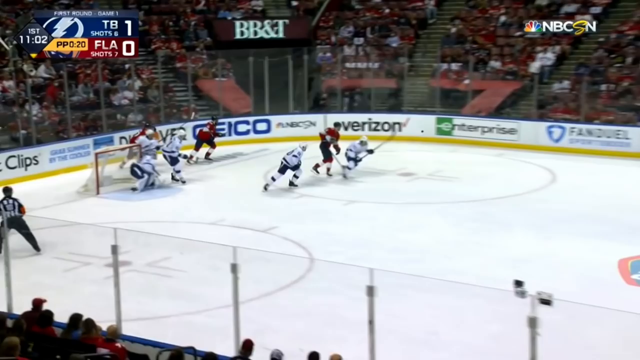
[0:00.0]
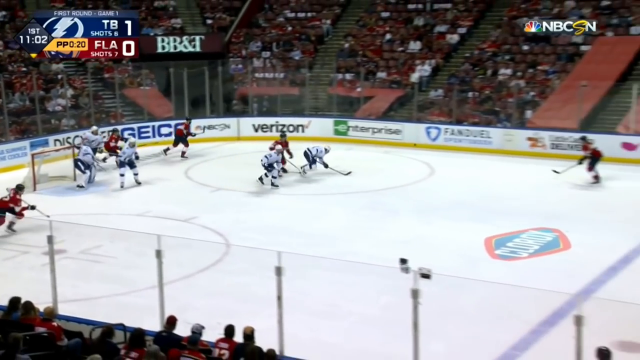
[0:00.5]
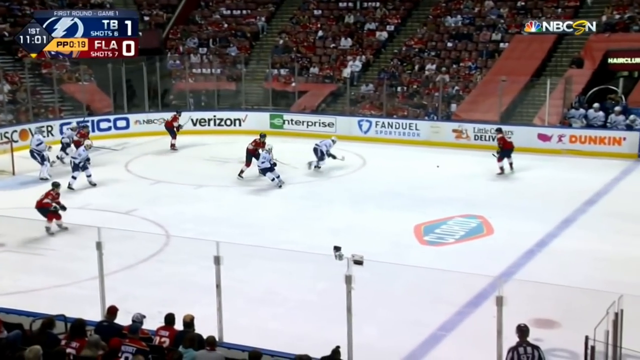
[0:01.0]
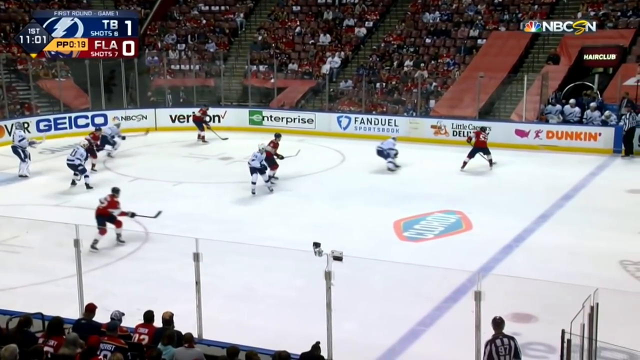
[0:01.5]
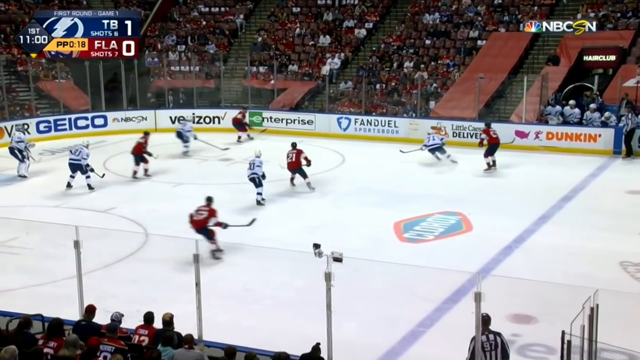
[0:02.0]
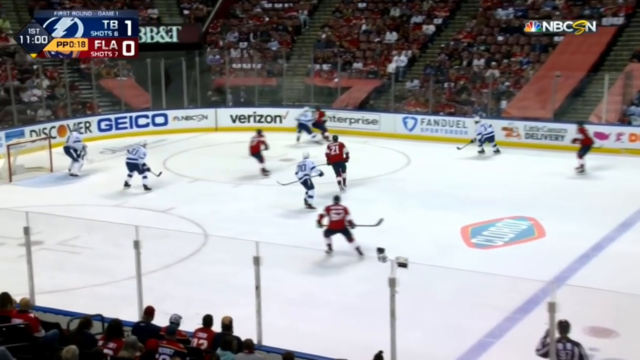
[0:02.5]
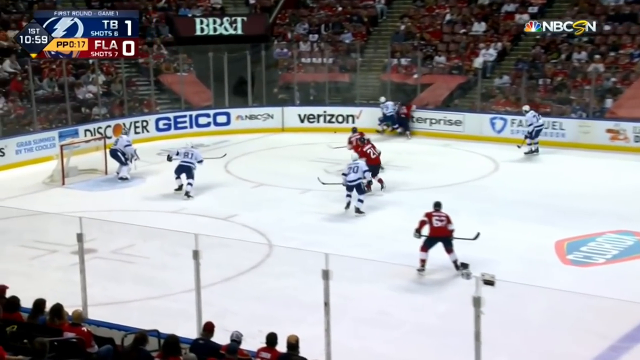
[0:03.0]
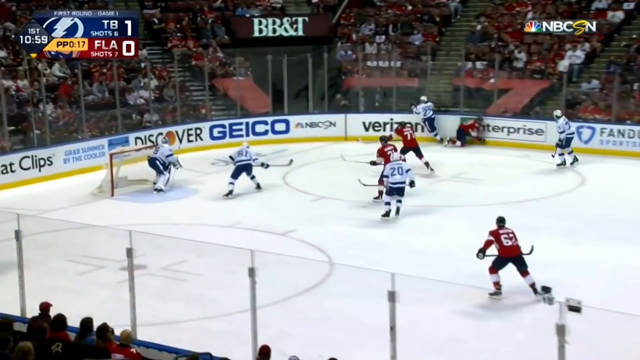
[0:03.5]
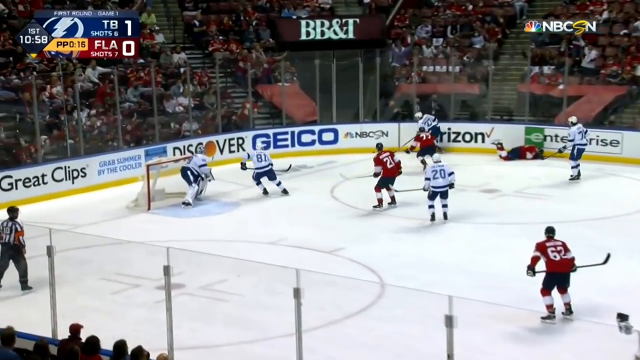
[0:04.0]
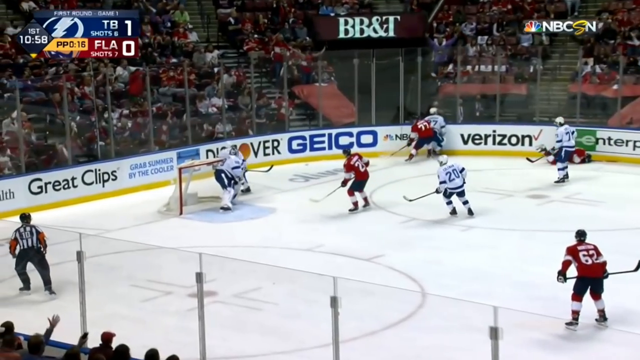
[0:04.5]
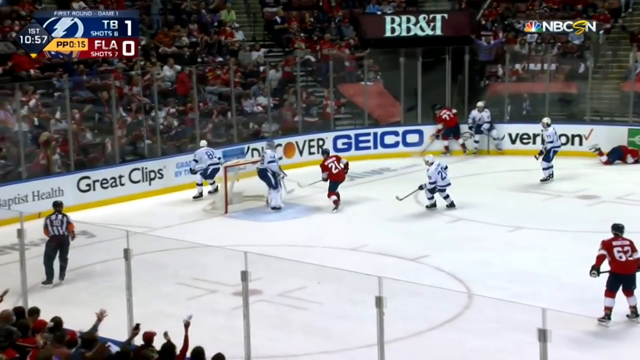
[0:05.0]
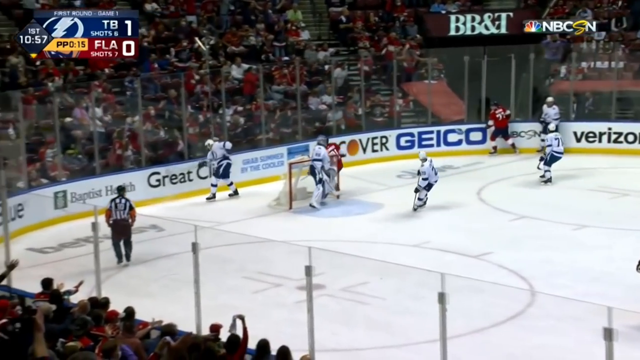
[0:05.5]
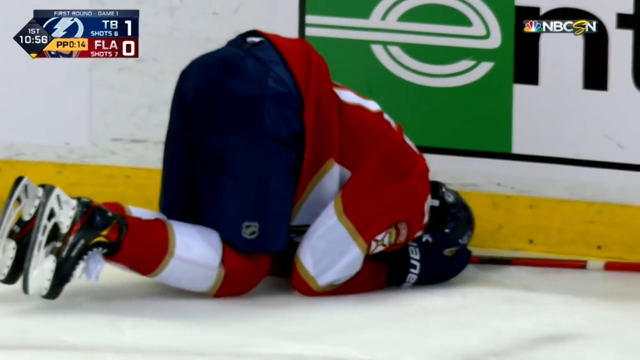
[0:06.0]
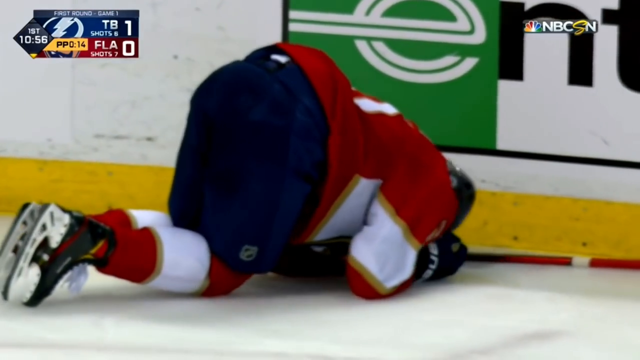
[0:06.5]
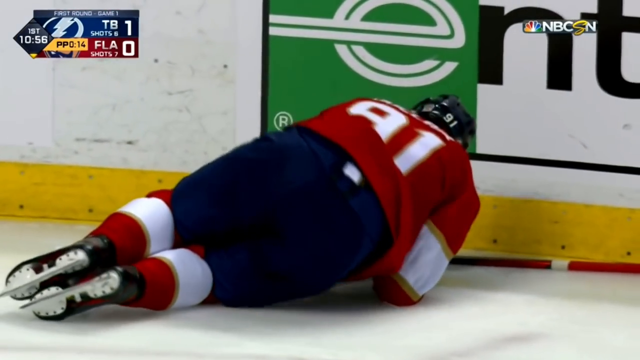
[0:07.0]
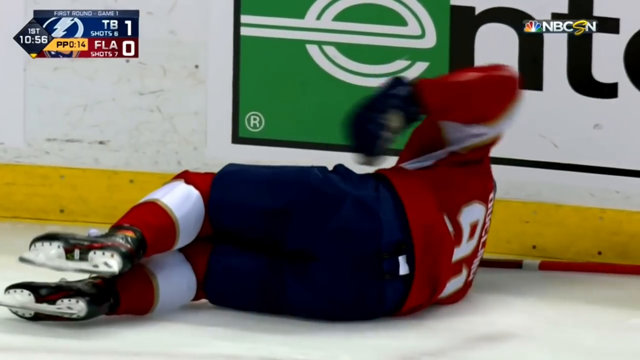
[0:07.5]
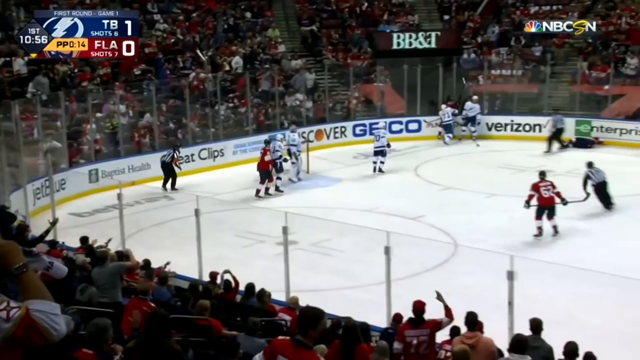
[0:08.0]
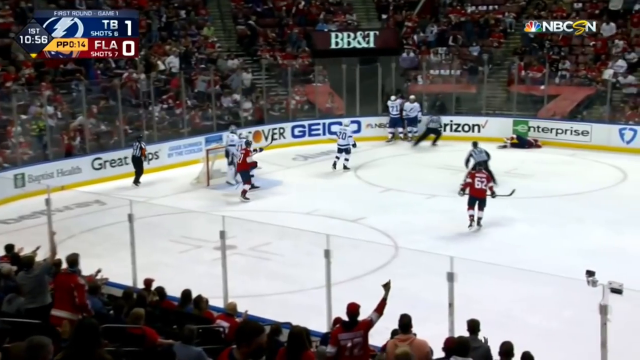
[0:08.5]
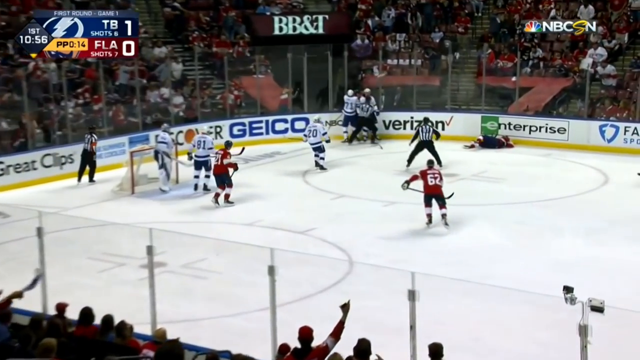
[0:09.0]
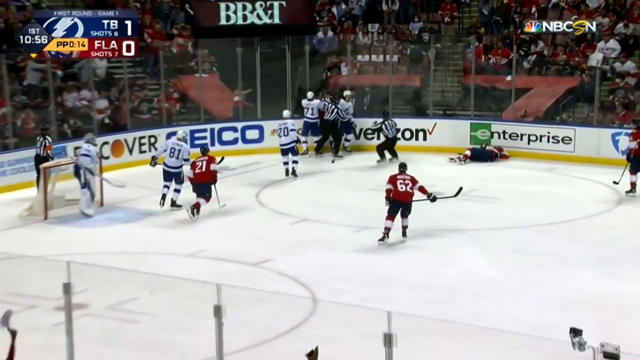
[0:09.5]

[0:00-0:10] A hockey game is being played on ice between what appears to be Florida, in red uniforms, and a TB team in blue and white uniforms. The players play aggressively around the rink, which carries sponsors such as Enterprise Rent-A-Car, Verizon, GEICO and BB&T. The game is on the channel NBCSN, and the score is 1-0. The stadium is apparently around three quarters full, and the time shown in the top left corner is 11.02. There is also a Clorox logo in the middle of the field.